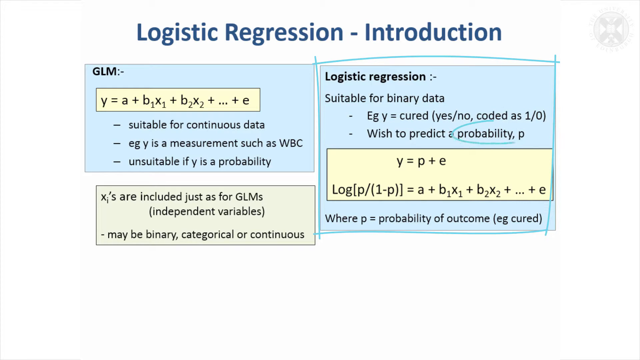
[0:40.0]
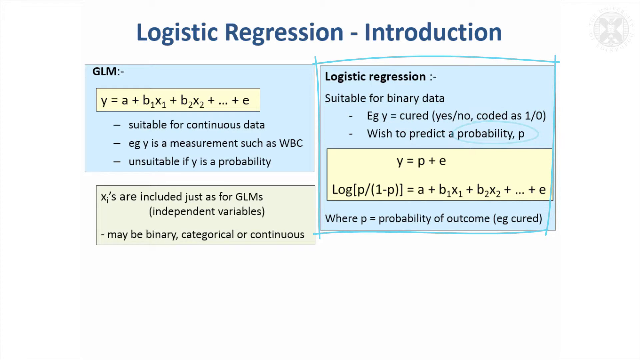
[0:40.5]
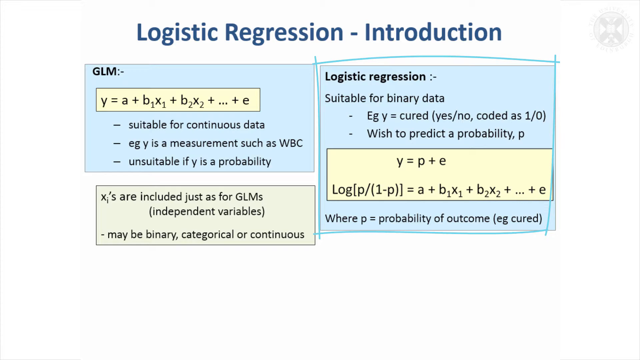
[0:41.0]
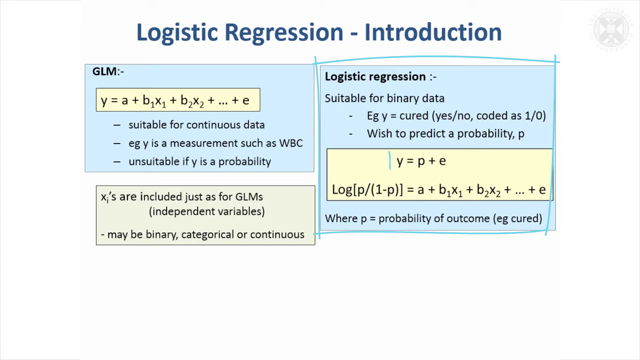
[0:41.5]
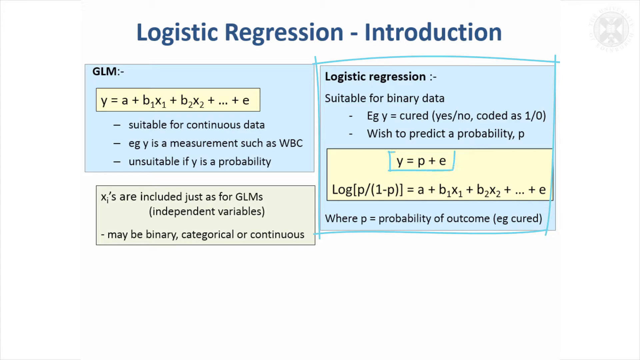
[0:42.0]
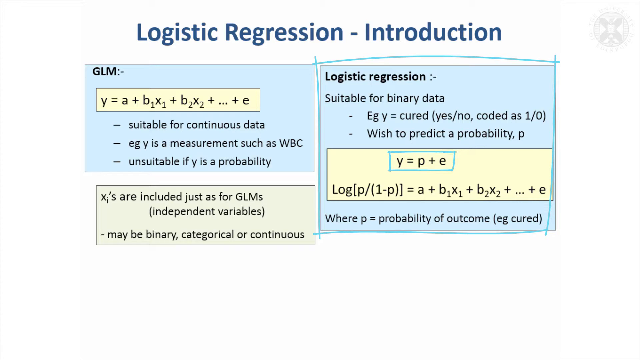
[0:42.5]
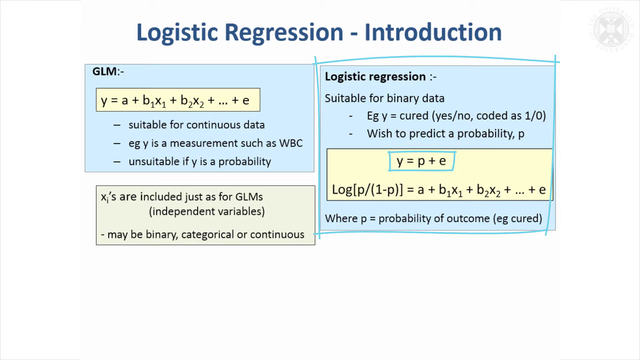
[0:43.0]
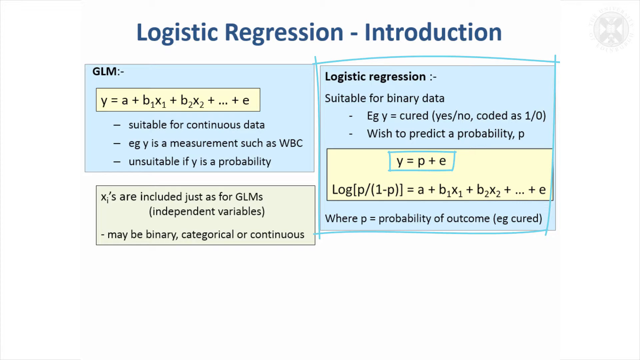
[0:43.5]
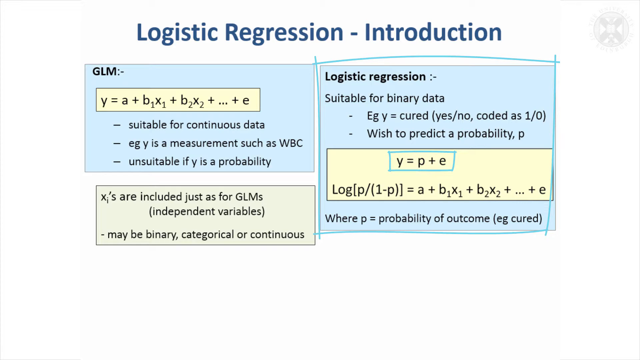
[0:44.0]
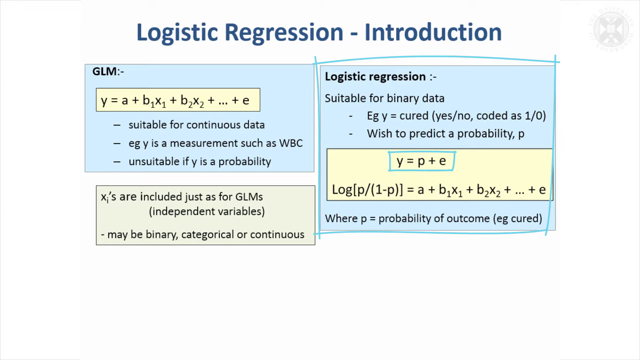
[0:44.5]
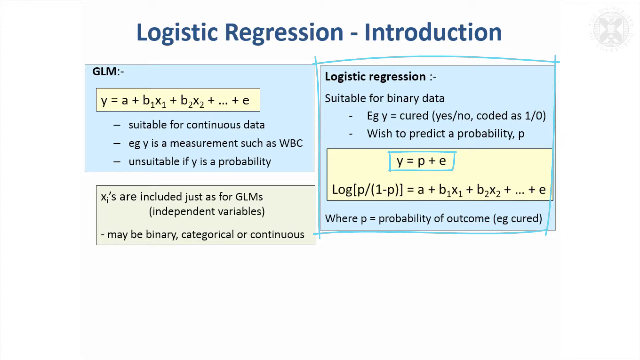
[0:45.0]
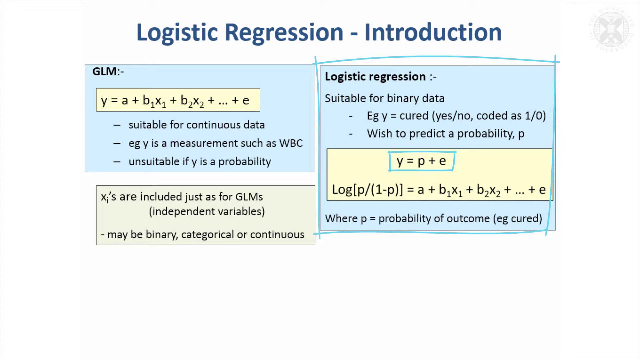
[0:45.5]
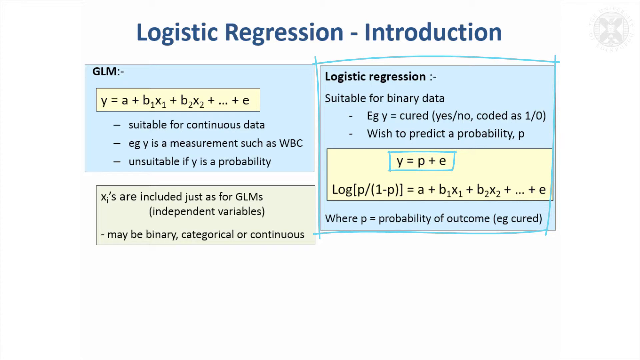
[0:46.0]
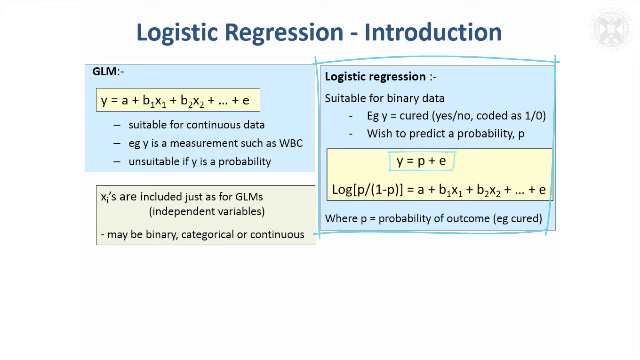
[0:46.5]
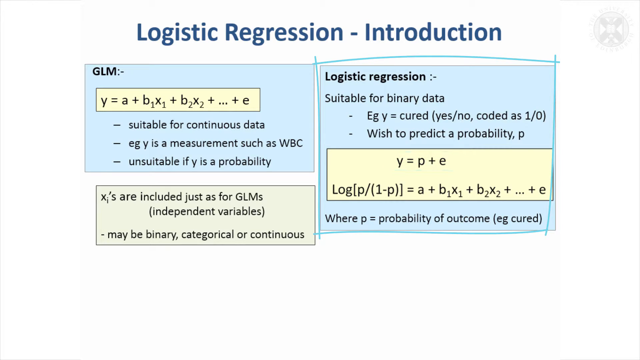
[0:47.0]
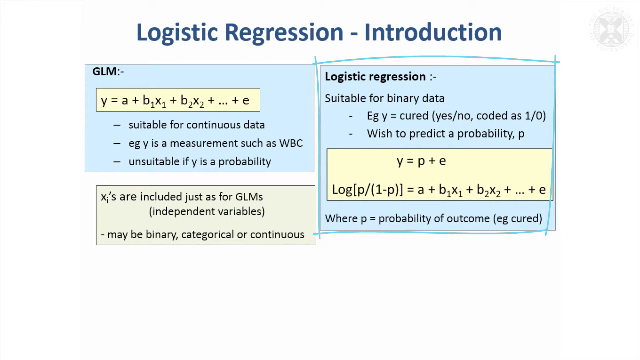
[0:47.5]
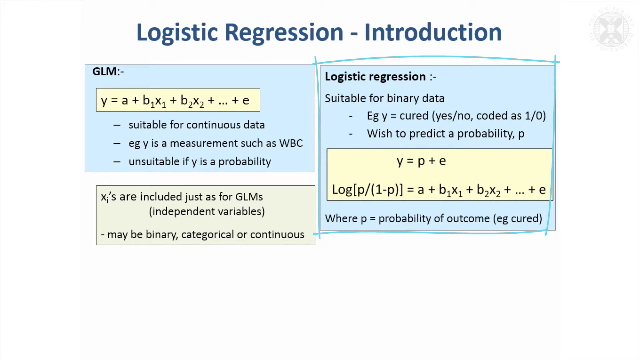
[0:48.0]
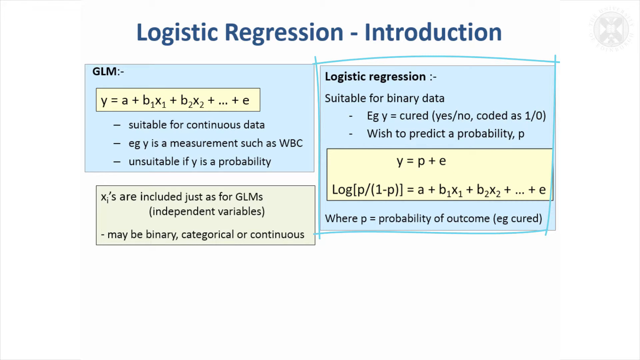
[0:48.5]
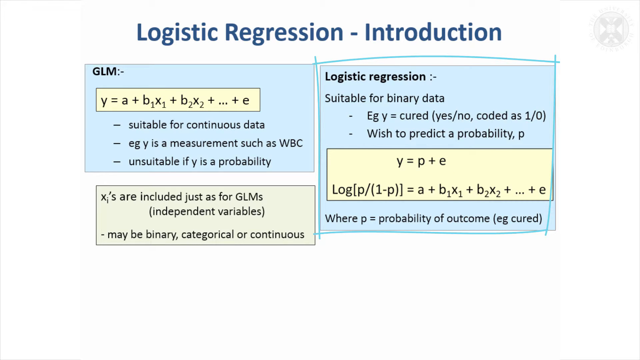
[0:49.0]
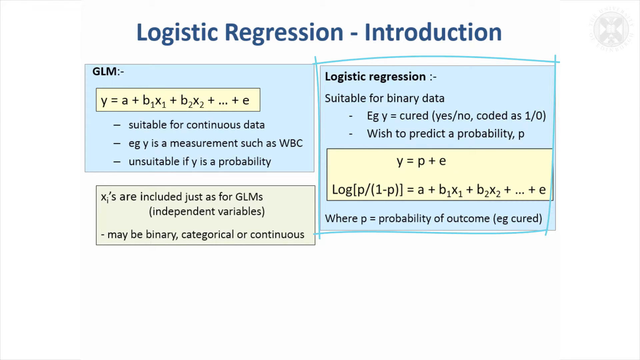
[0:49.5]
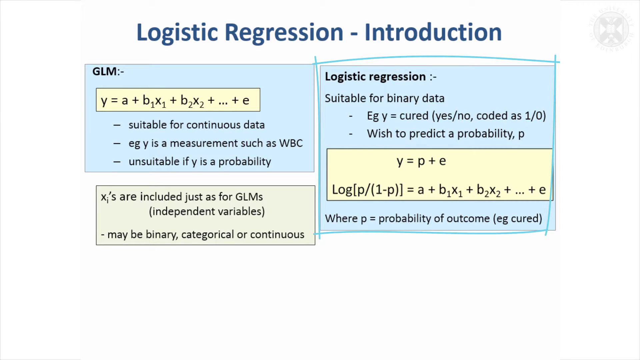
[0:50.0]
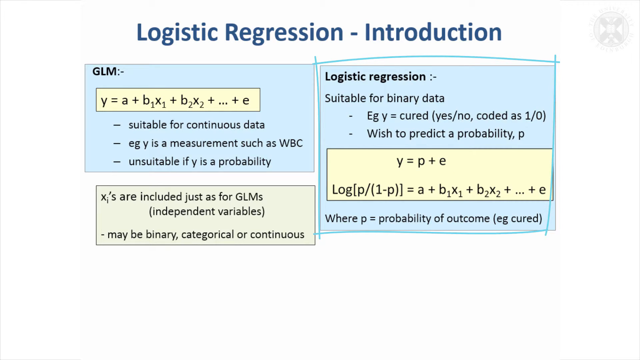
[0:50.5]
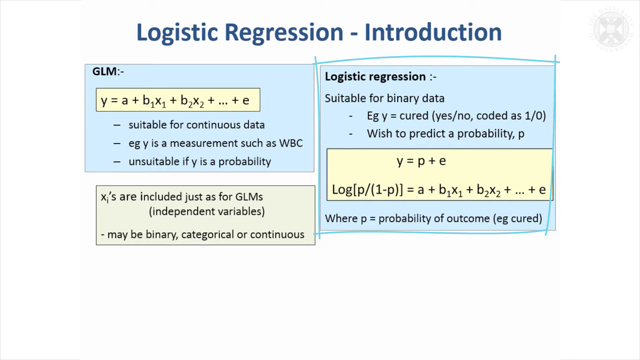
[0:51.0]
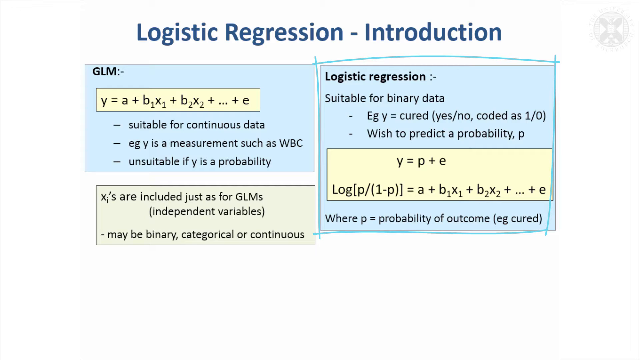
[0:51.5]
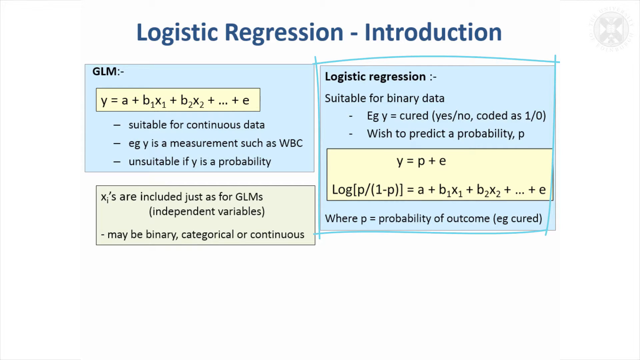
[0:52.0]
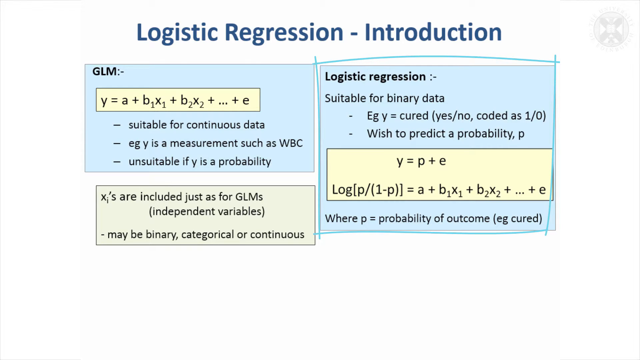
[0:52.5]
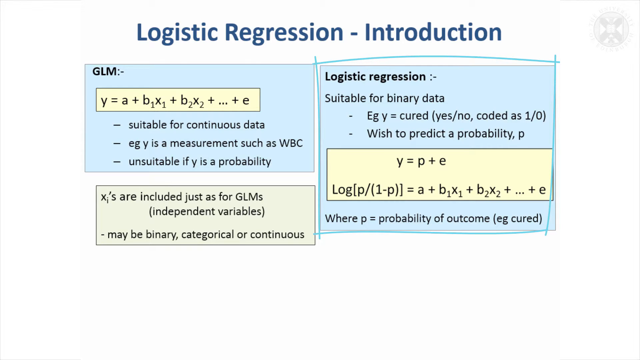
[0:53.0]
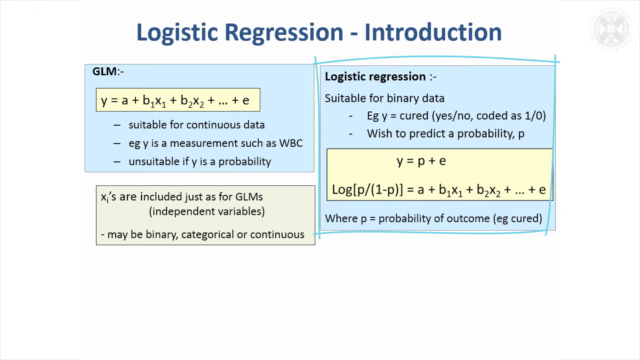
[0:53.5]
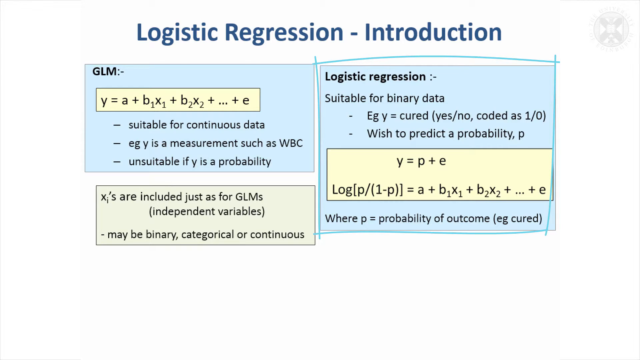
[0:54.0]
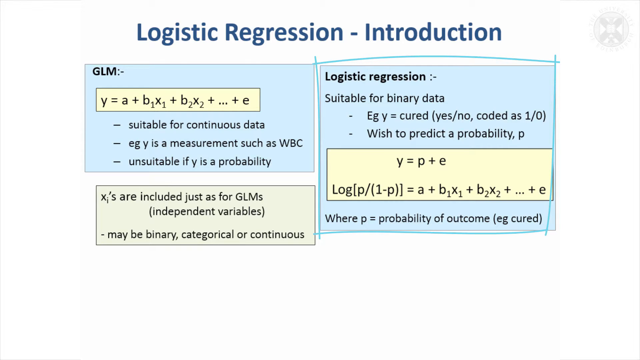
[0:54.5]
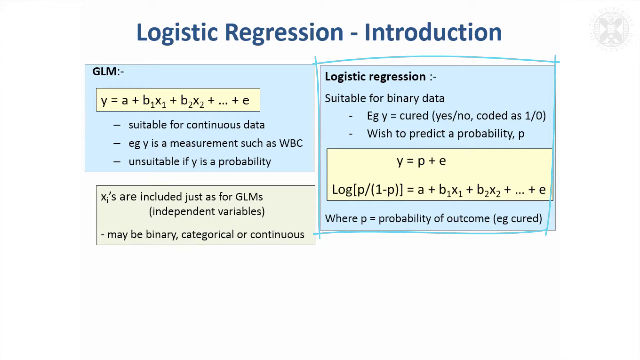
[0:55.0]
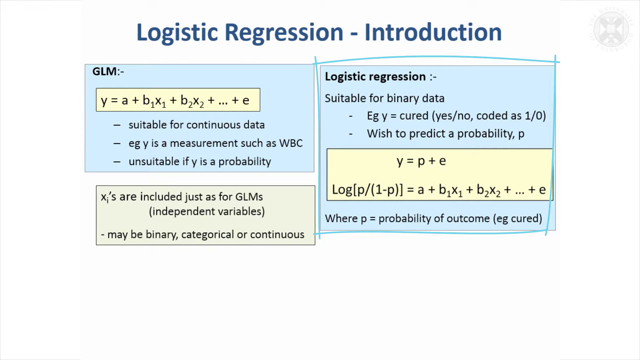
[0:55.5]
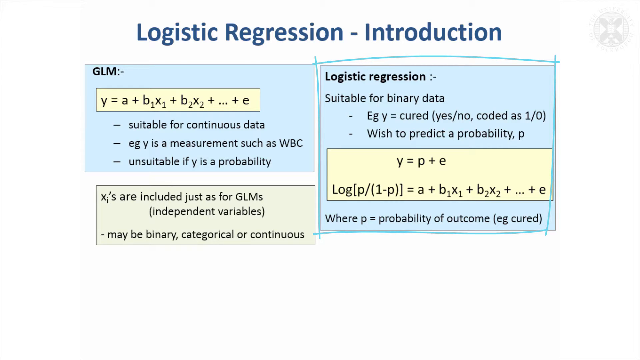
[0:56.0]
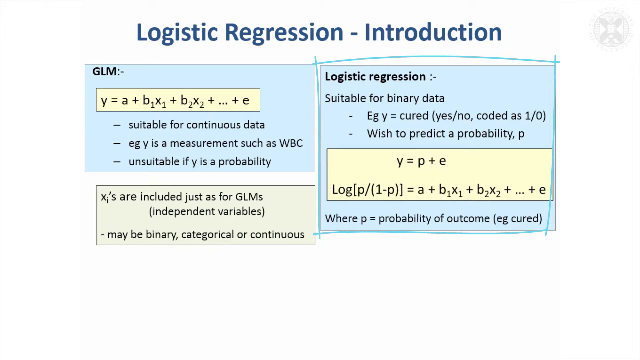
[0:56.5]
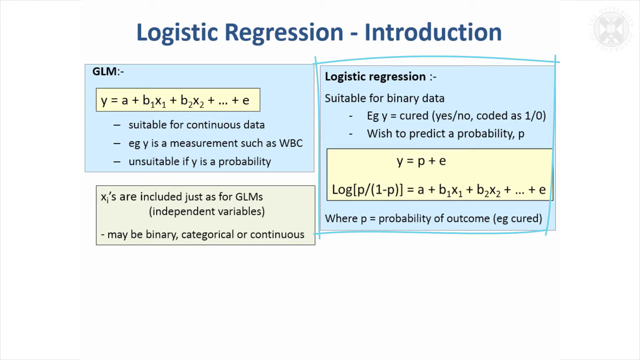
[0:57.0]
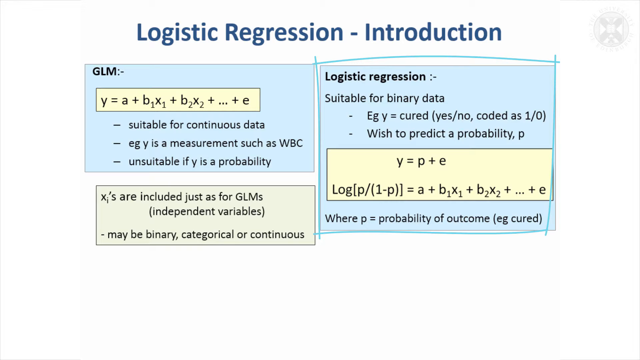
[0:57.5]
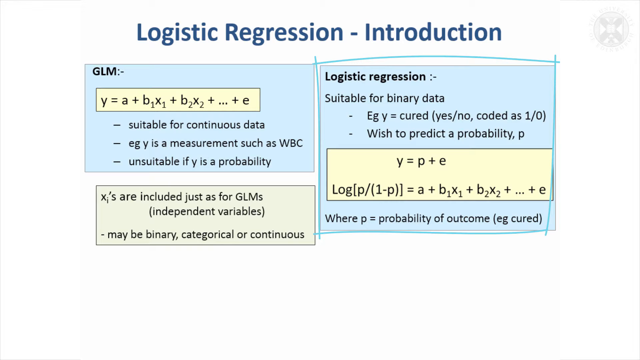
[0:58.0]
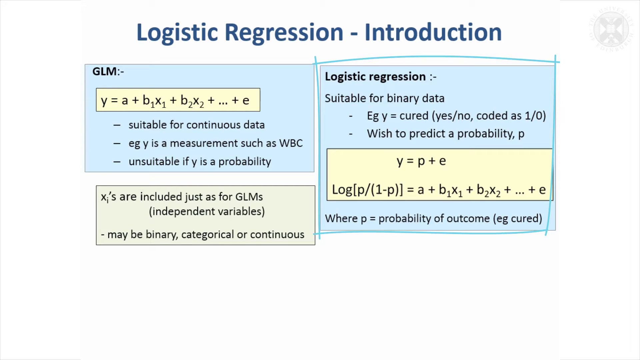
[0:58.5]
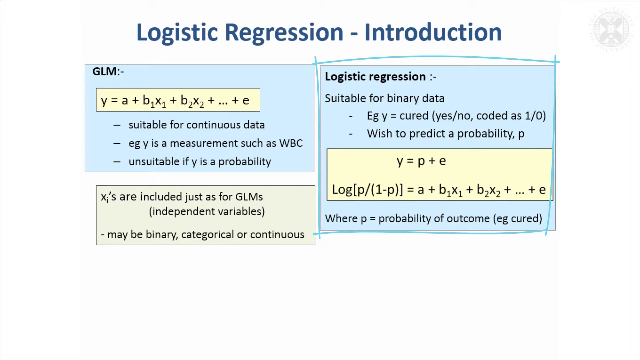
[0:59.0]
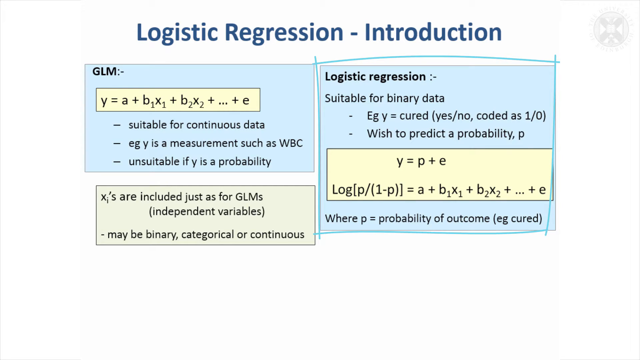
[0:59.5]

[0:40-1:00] An introduction to logistic regression is on the screen, all on a white background, with a logo in the top right that is not very visible. There are three tables. The first is a GLM table with the equation y = a + b1x1 + b2x2 + ... + e, all on a blue background, and below the equation are points including "suitable for continuous data". The second is a logistic regression table stating it is "suitable for binary data", with a point reading "wish to predict probability" and an equation on a yellow background reading y = p + e. A final small table on the lower part of the first table reads "xis are included just as for GLMS", with a bracket reading "independent variables" and "may be binary, categorical, or continuous".